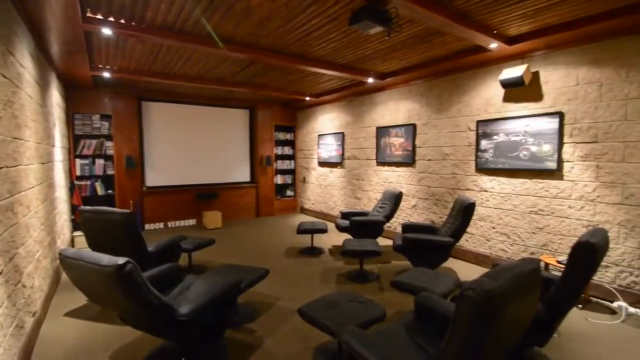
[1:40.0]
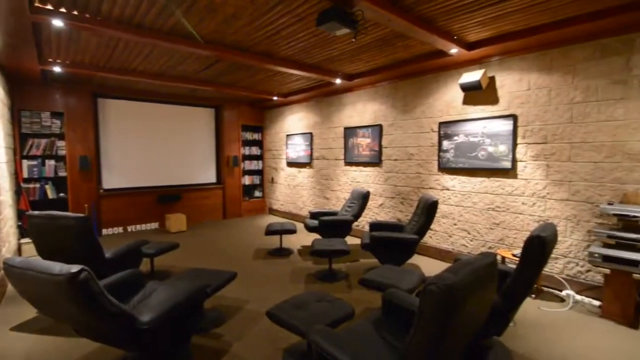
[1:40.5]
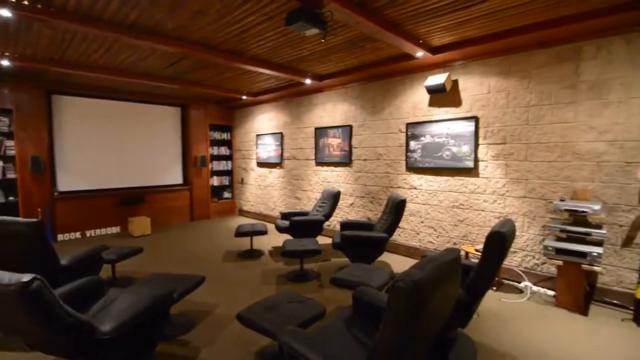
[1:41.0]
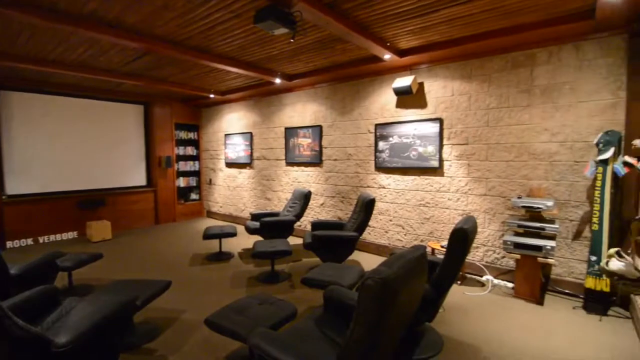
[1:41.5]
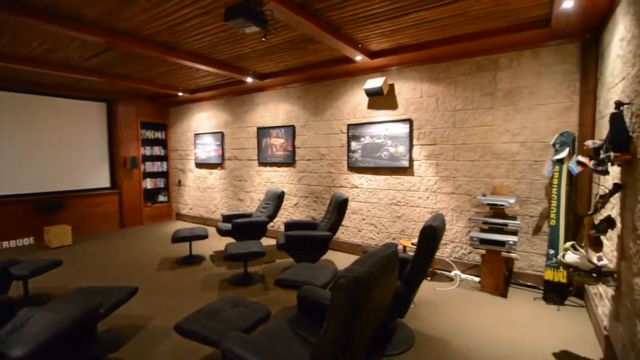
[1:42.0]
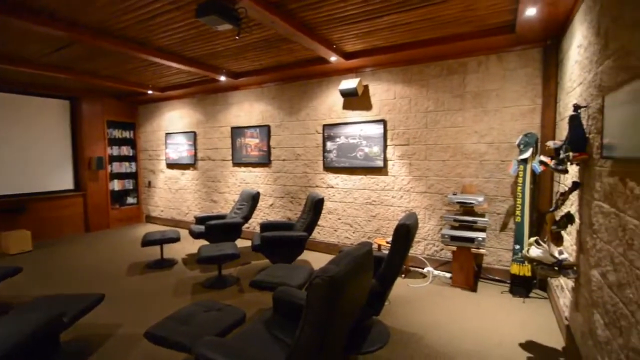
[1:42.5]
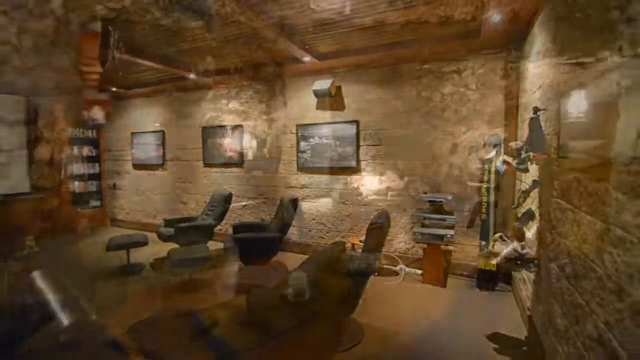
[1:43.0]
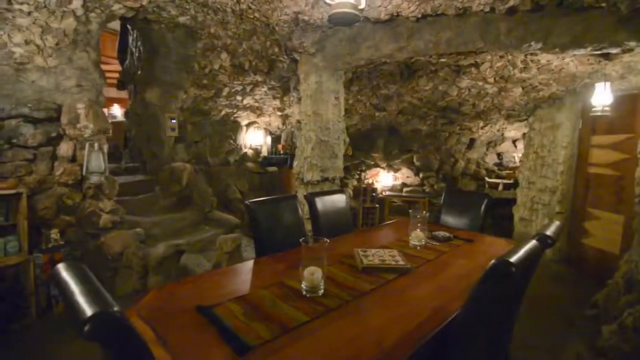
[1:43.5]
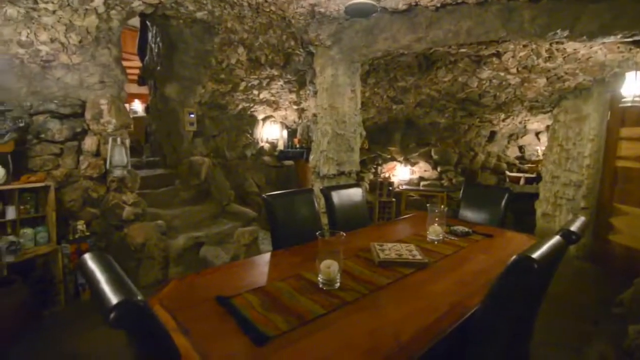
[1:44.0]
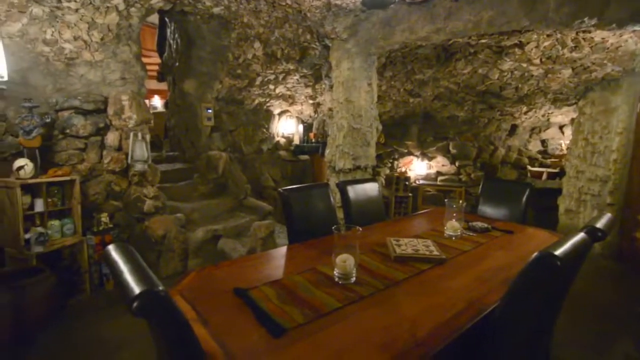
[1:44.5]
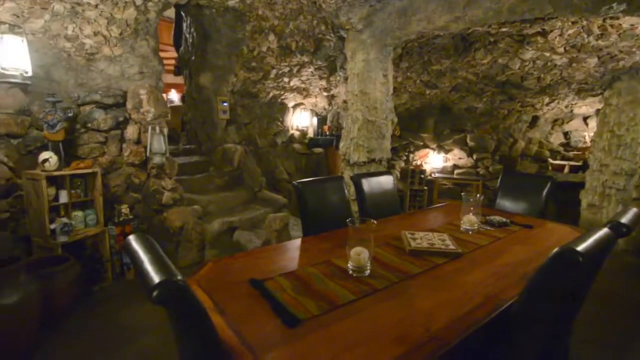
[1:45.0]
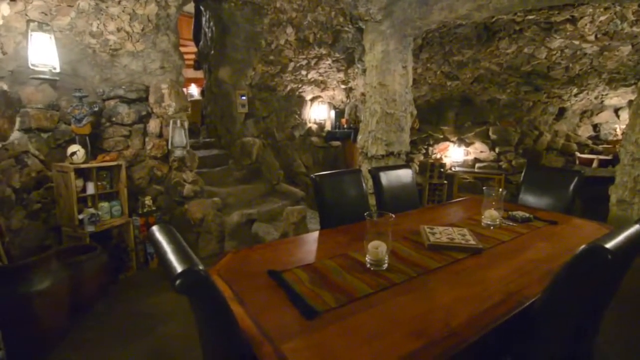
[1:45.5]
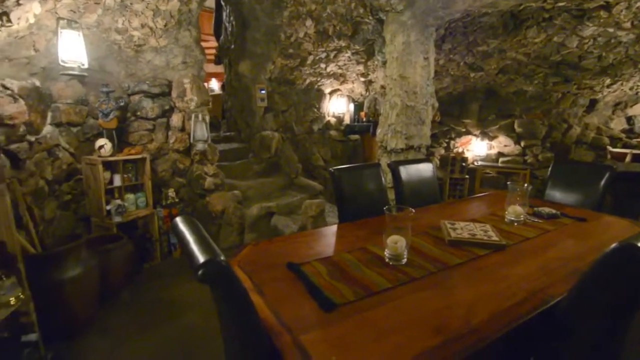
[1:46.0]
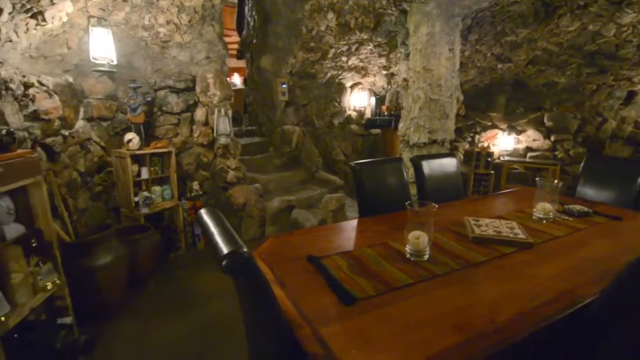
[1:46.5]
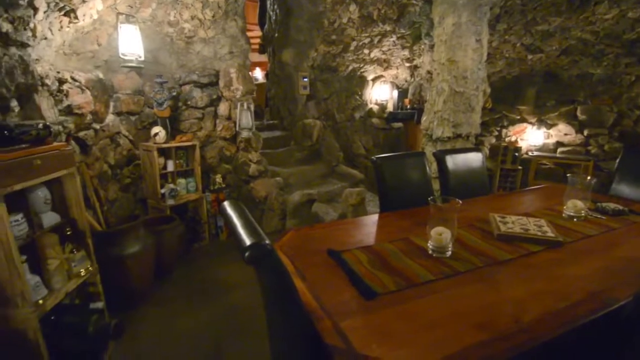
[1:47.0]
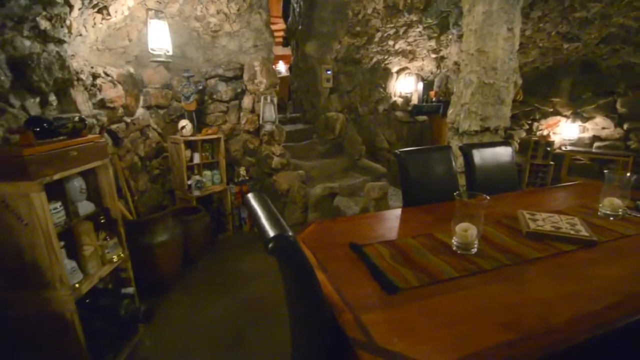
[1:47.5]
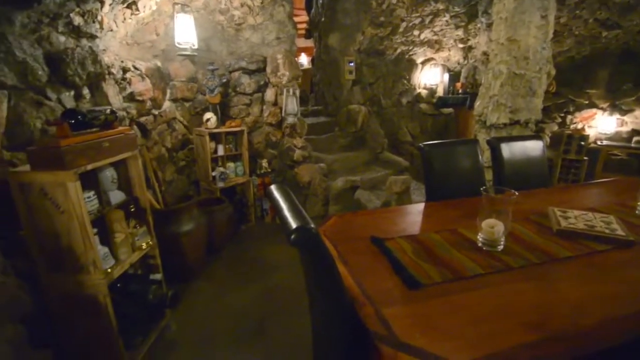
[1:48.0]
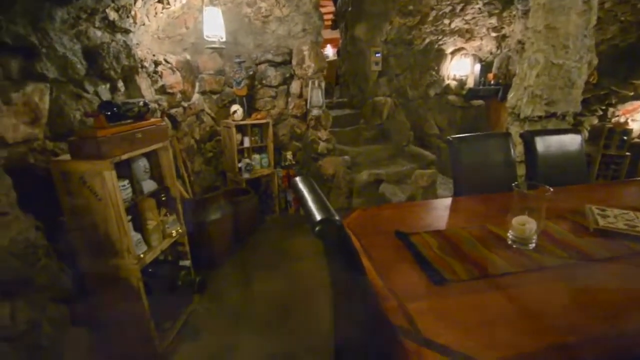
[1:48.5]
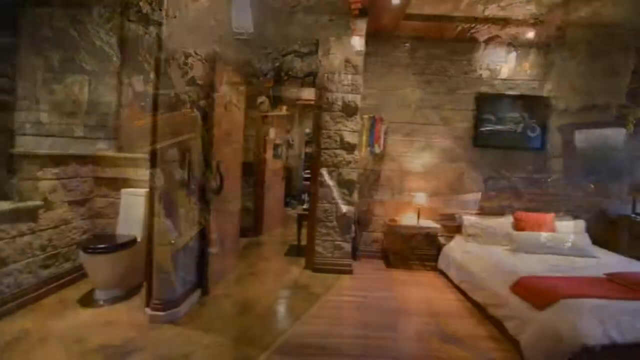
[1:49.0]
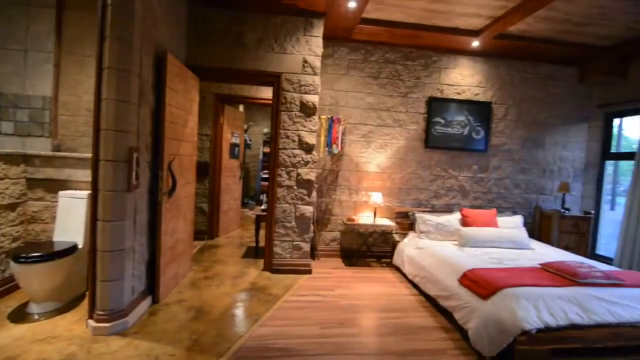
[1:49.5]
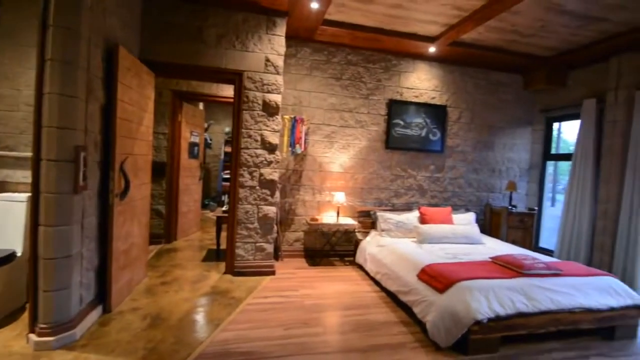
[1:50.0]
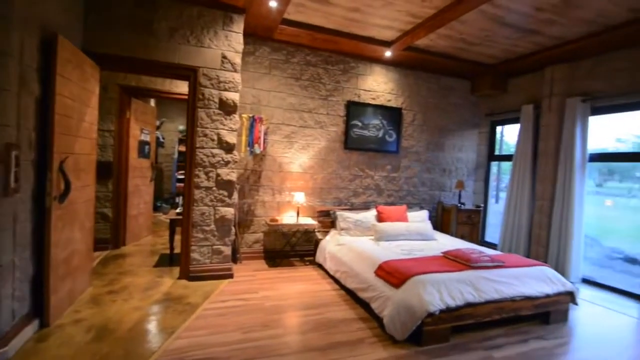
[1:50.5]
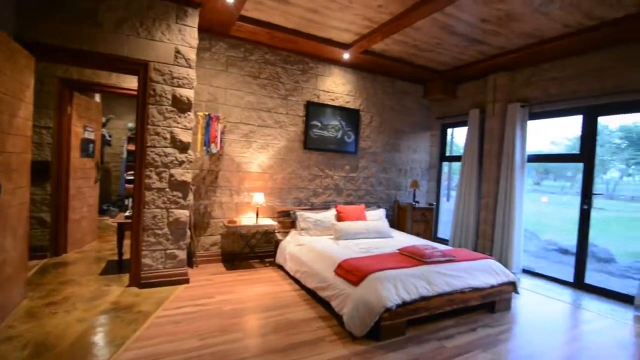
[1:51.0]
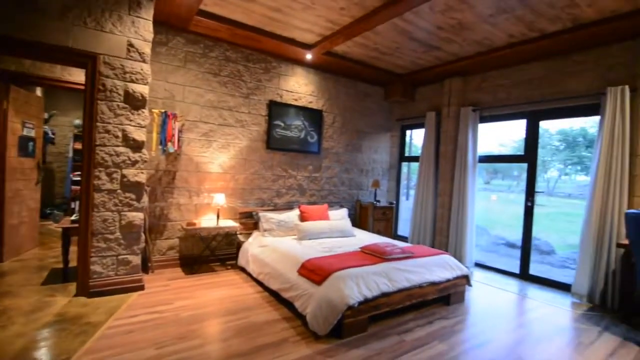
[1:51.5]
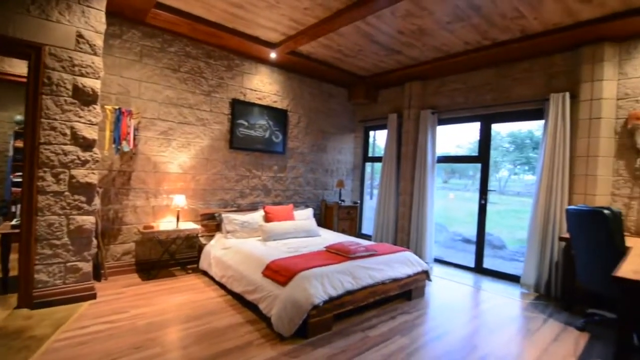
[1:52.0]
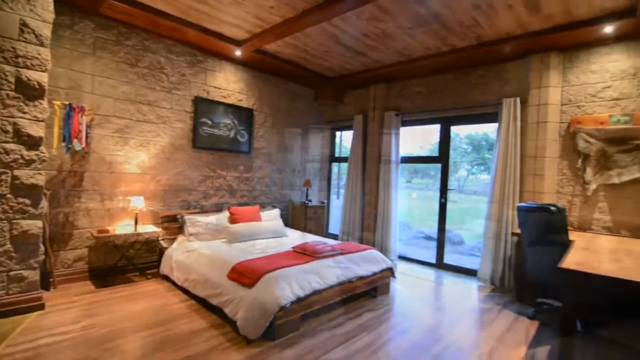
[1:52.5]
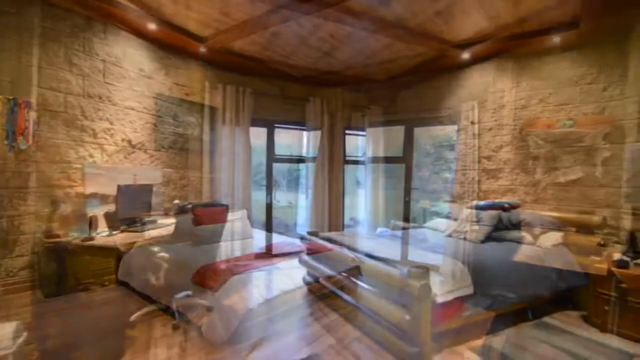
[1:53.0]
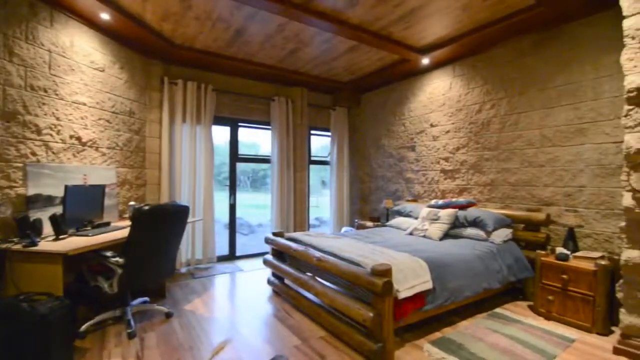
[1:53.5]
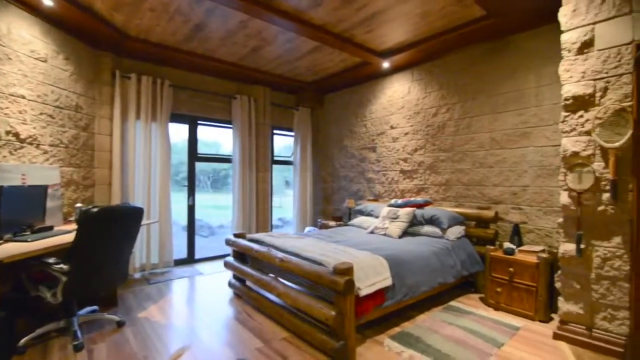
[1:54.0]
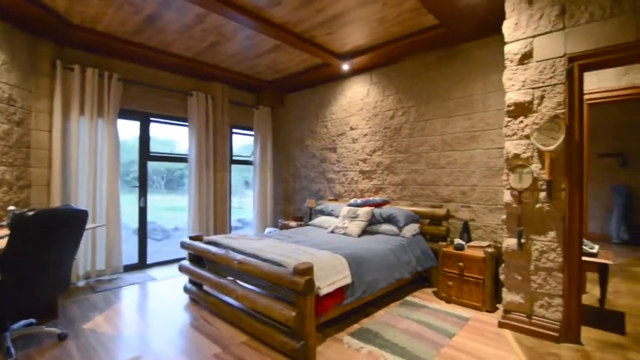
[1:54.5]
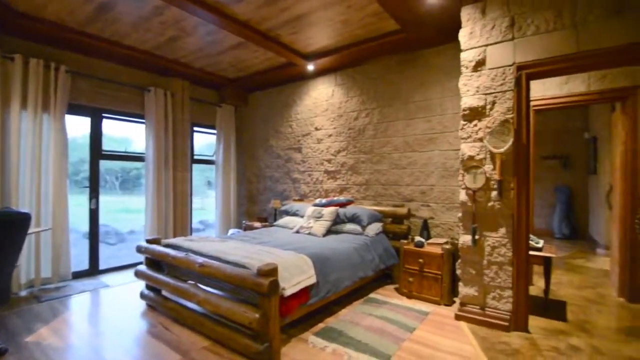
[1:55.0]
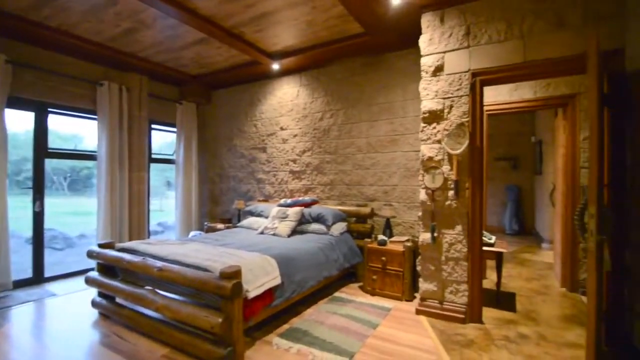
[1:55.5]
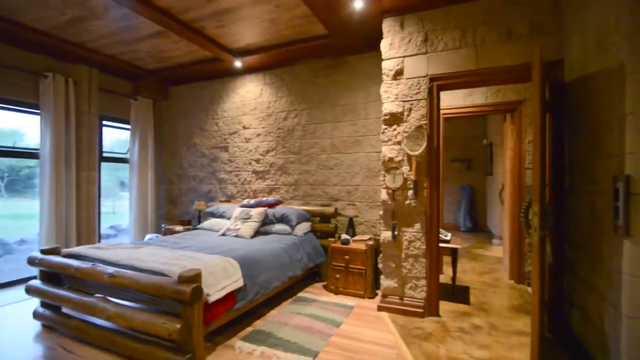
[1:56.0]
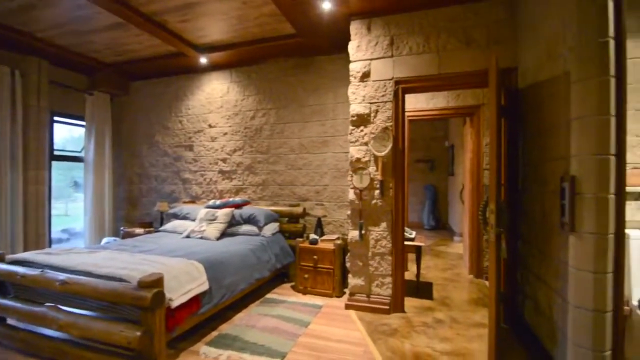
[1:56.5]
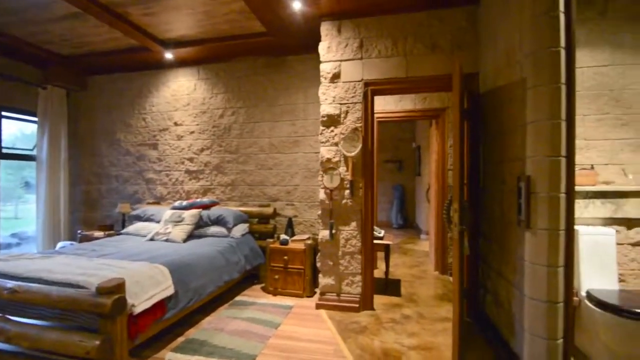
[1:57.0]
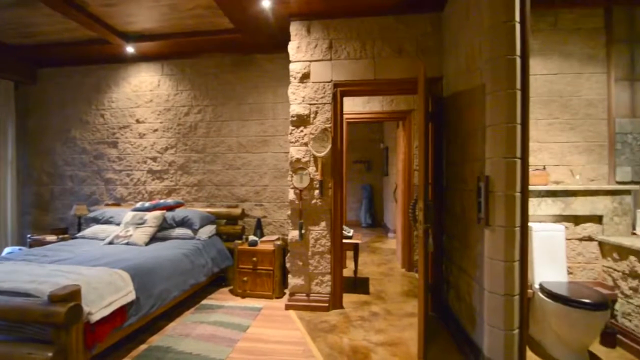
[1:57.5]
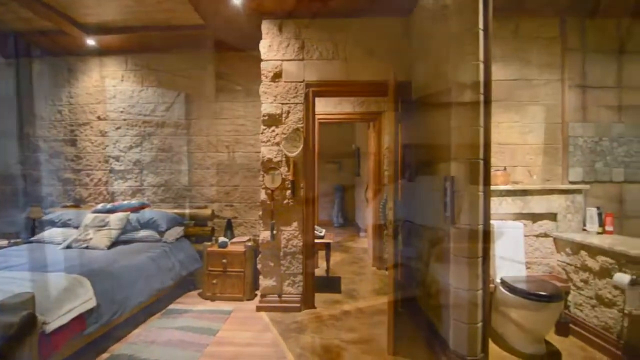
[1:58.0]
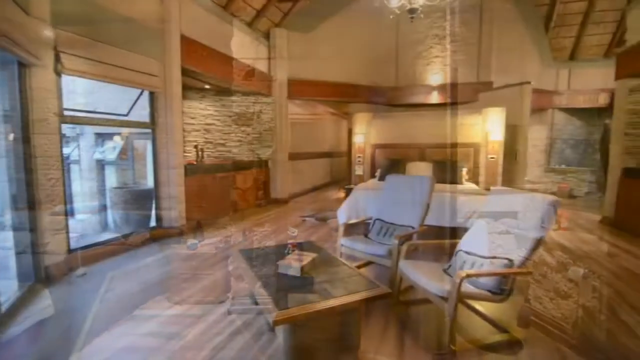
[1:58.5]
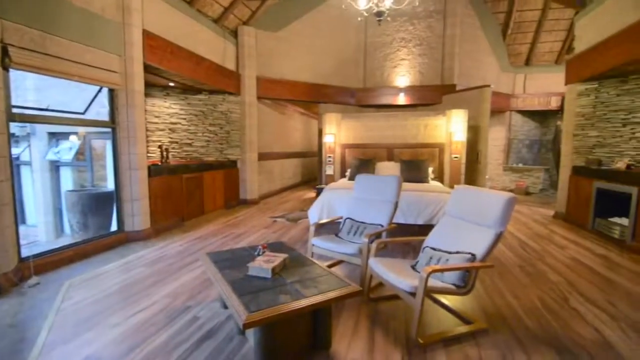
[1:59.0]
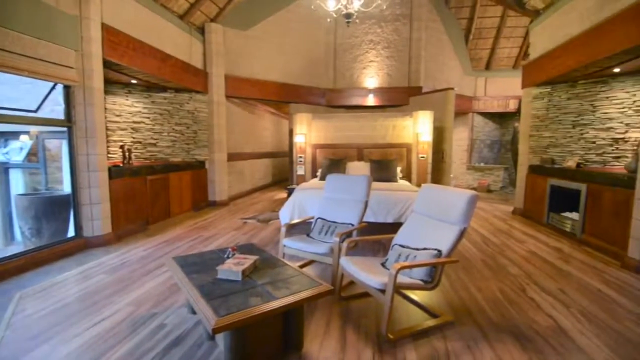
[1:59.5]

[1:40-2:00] The video starts inside with a movie room that has a built-in TV. There is a dining area, and the walls look like stone; all the walls appear to be stone. The dining room looks like a cave, with stone like the inside of a cave. There is a bedroom with a stone wall of cut slabs. The open floor plan lets one room go into another. No people are seen. The house looks rustic, with exposed beams, and is decorated in earth tones with many places to sit. There are a lot of lights built into the ceiling and into the wall over pictures, and the house is very well lit.